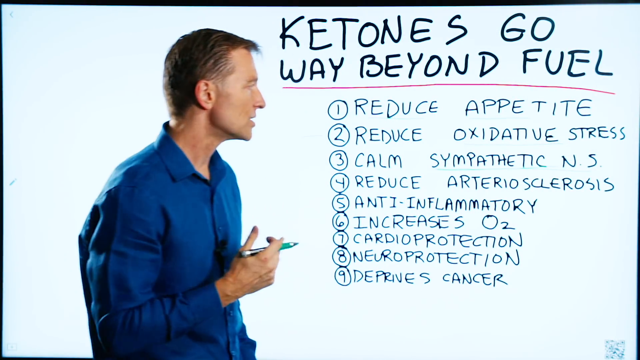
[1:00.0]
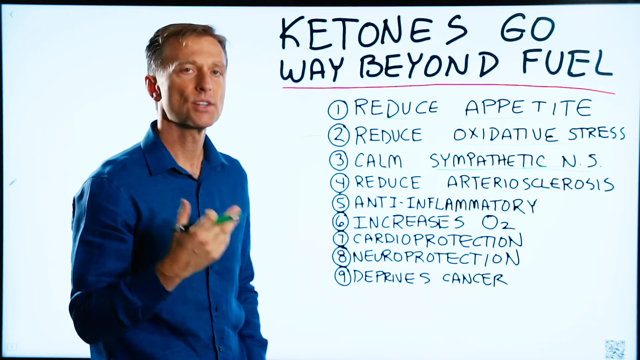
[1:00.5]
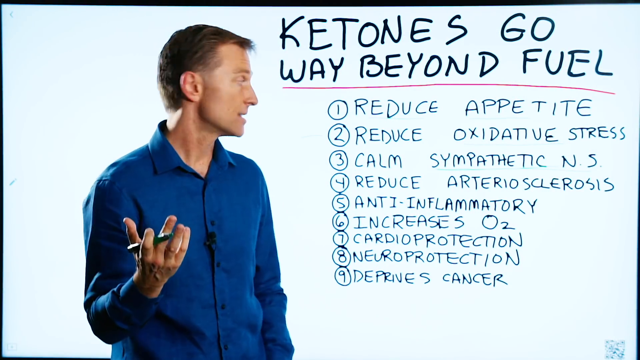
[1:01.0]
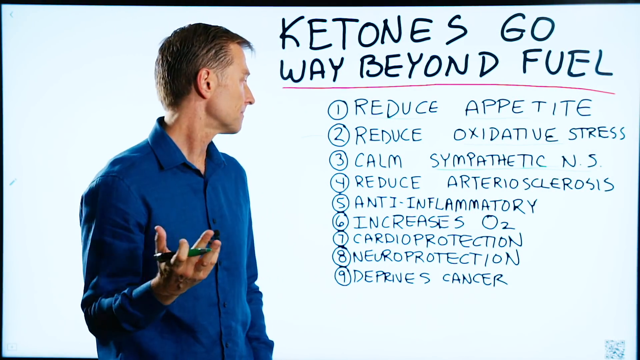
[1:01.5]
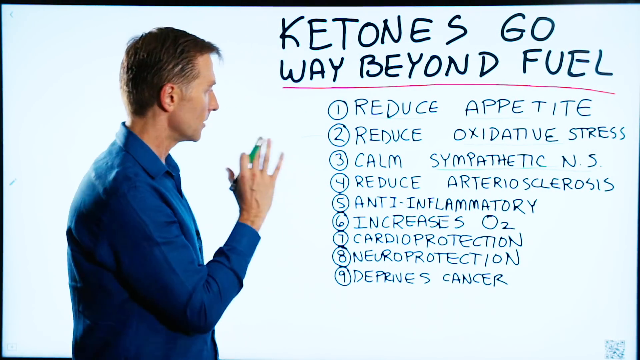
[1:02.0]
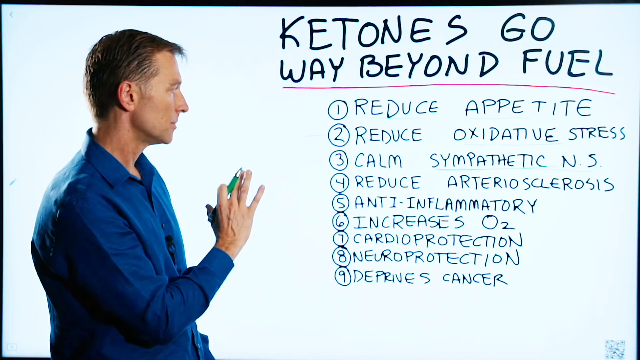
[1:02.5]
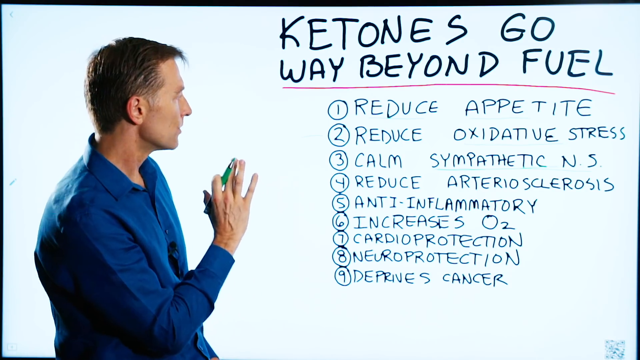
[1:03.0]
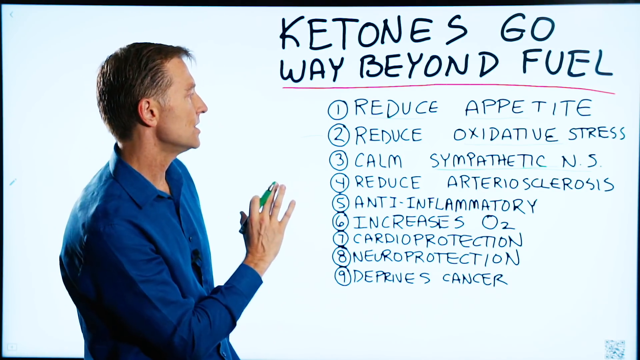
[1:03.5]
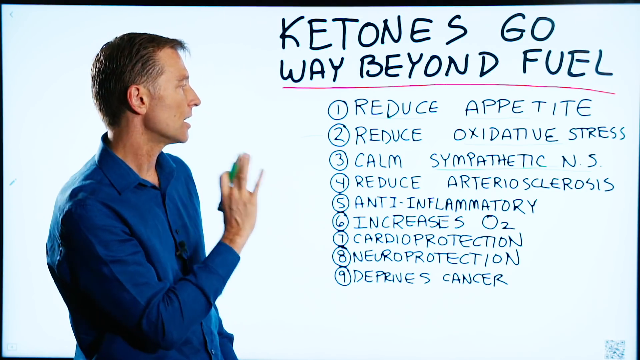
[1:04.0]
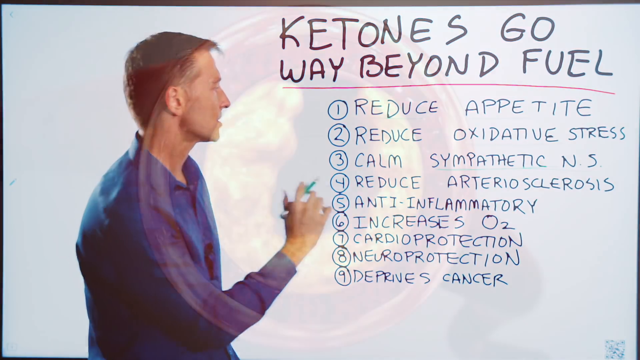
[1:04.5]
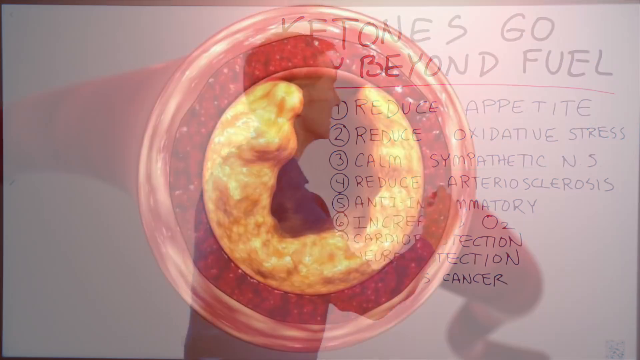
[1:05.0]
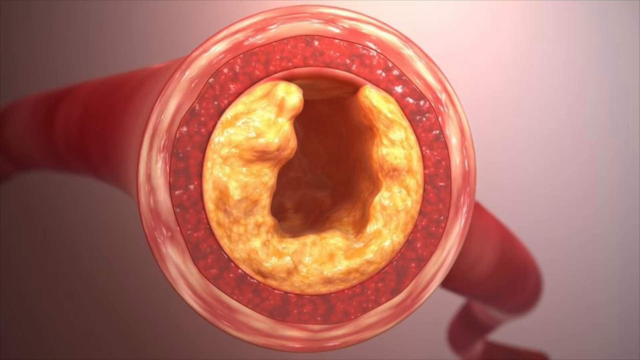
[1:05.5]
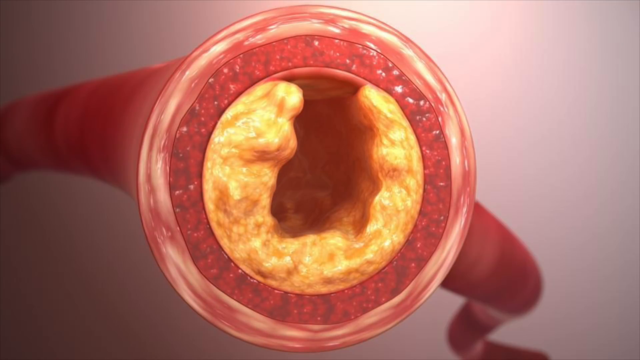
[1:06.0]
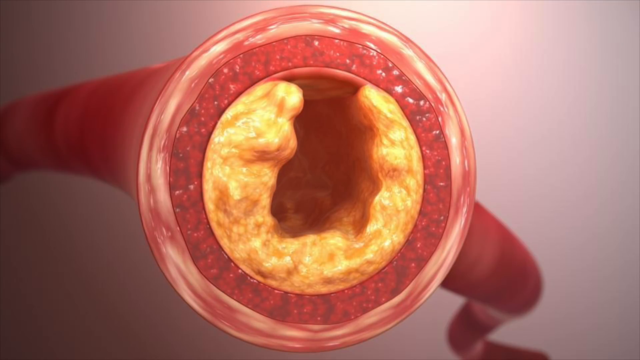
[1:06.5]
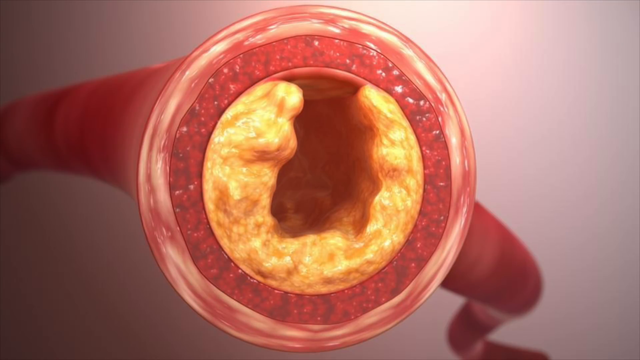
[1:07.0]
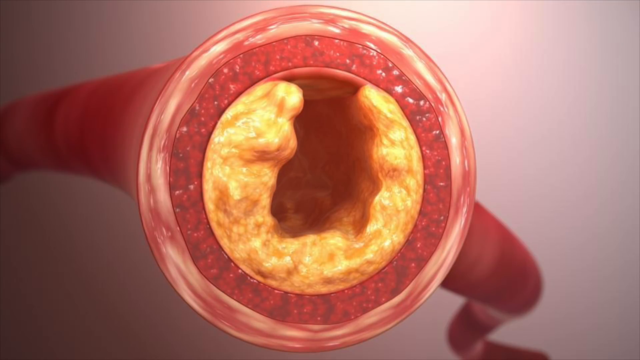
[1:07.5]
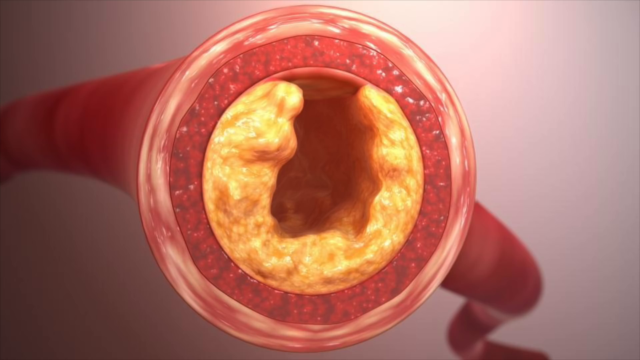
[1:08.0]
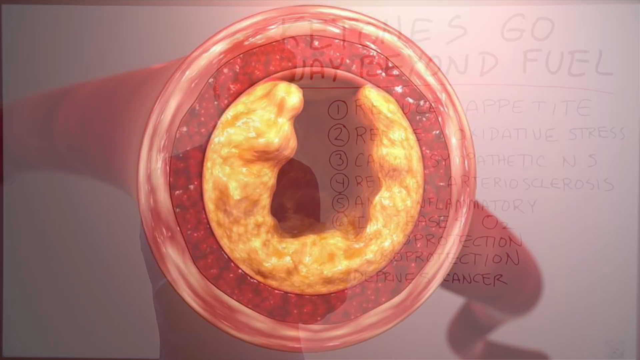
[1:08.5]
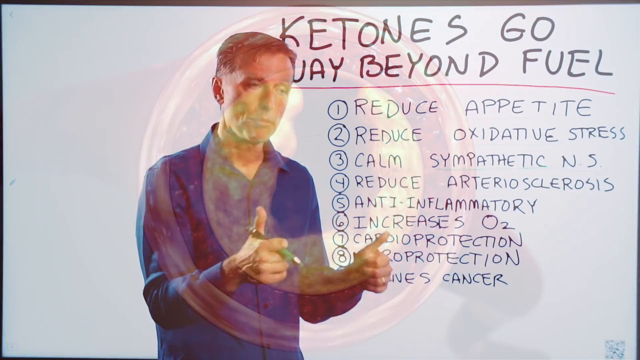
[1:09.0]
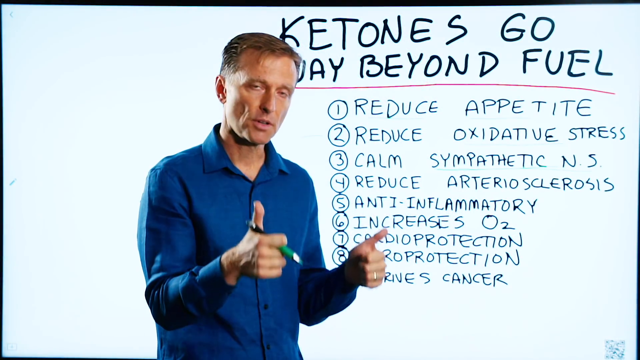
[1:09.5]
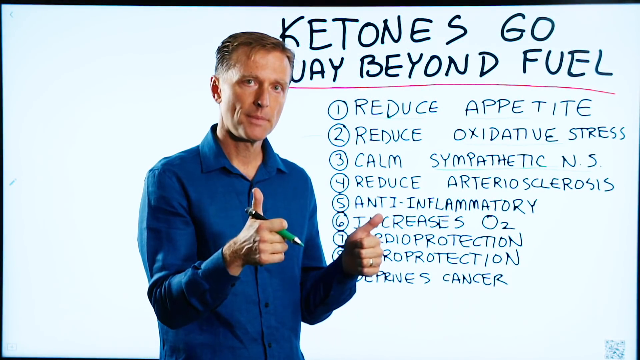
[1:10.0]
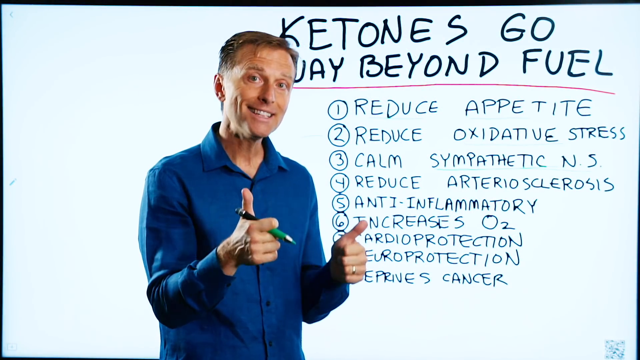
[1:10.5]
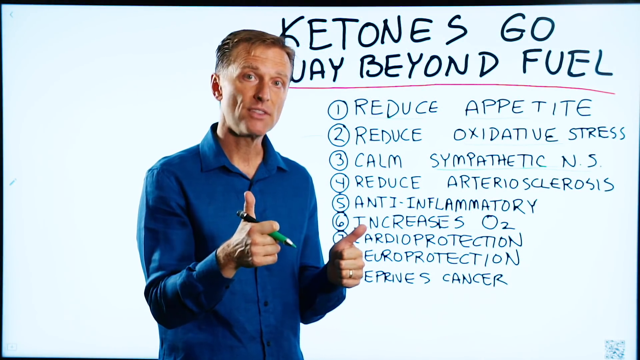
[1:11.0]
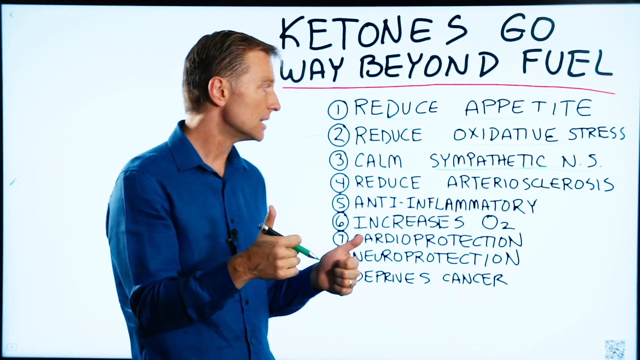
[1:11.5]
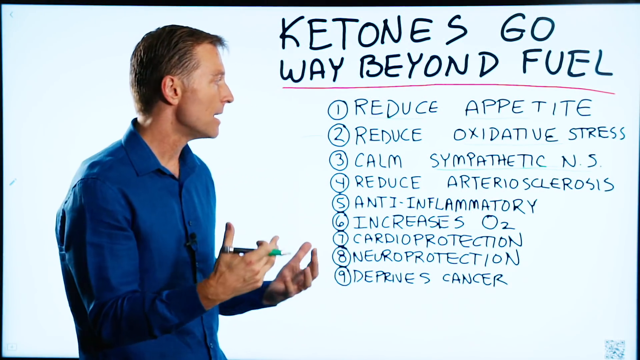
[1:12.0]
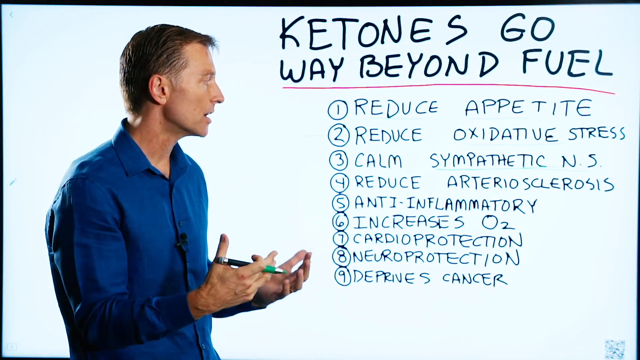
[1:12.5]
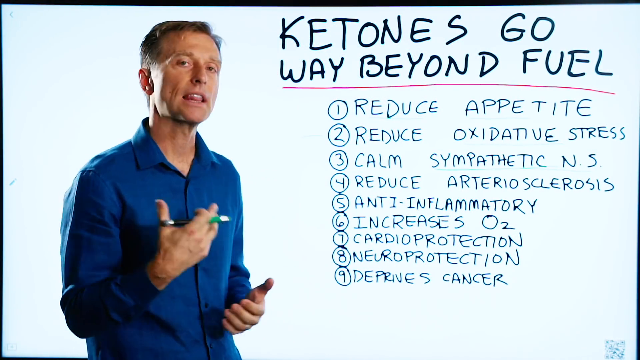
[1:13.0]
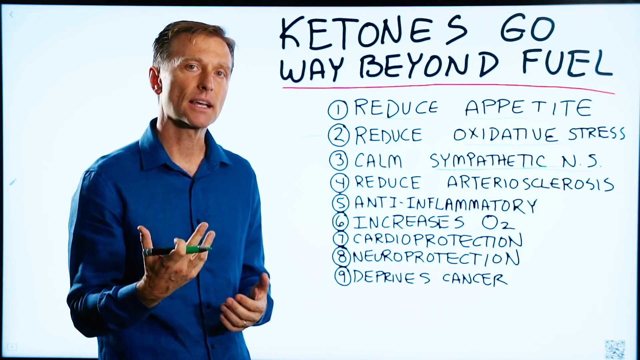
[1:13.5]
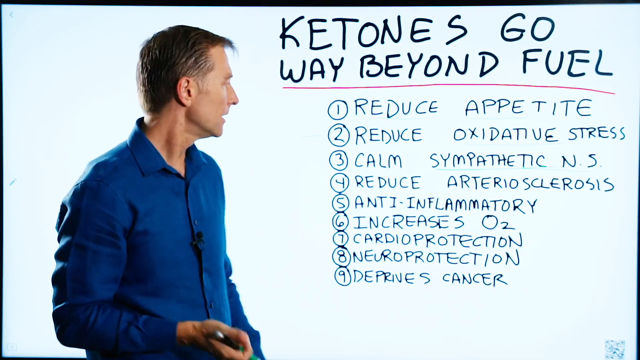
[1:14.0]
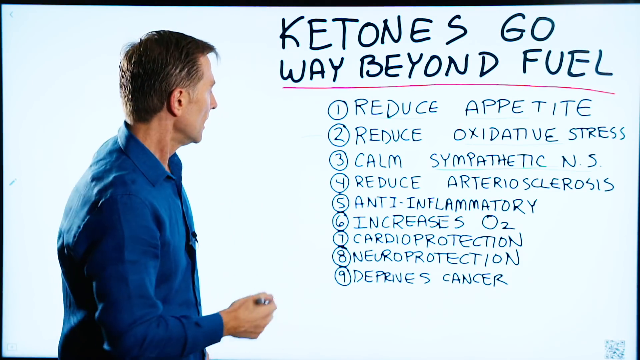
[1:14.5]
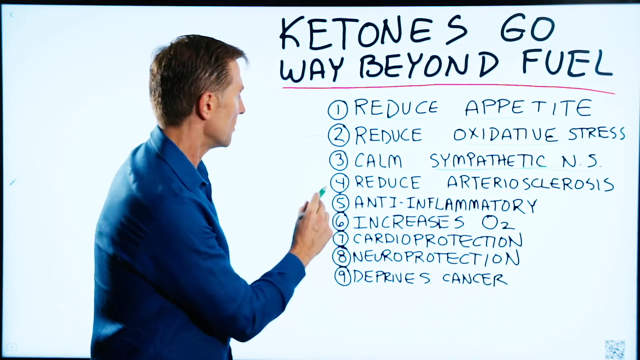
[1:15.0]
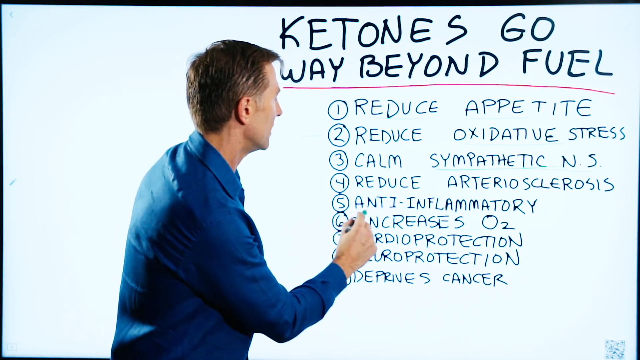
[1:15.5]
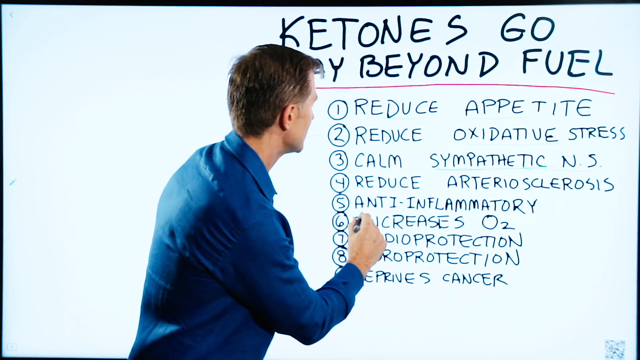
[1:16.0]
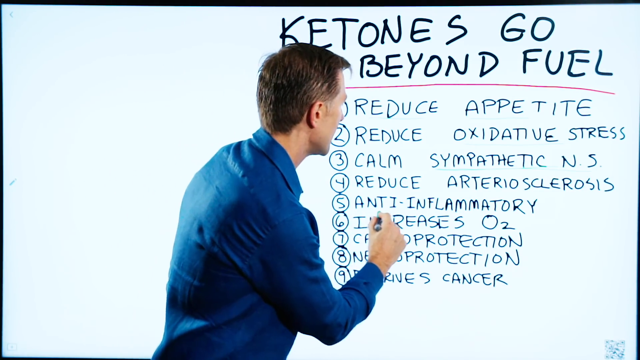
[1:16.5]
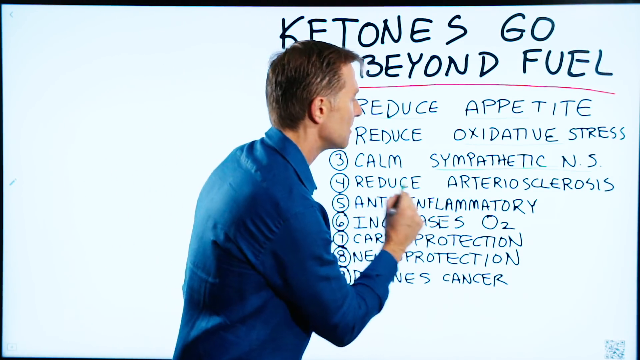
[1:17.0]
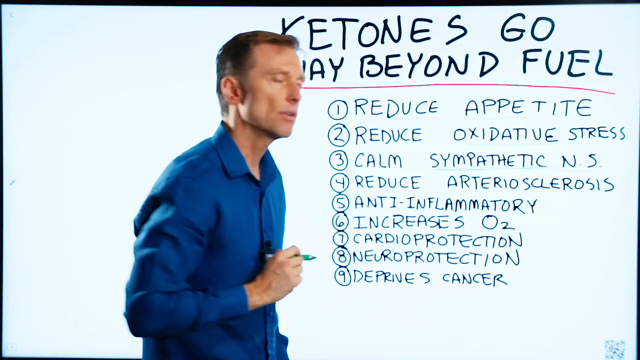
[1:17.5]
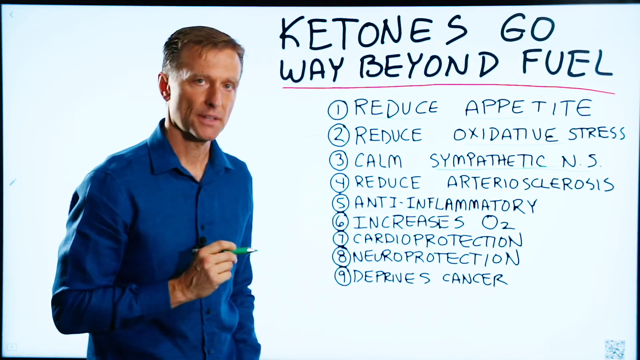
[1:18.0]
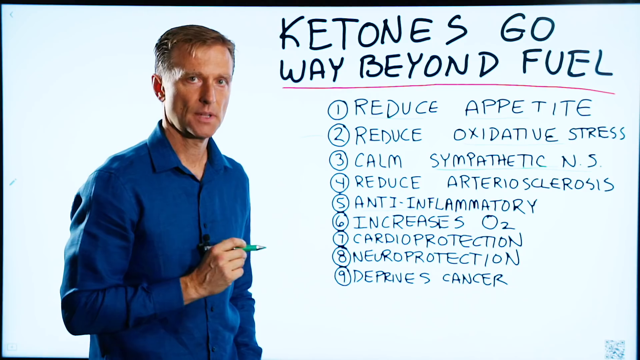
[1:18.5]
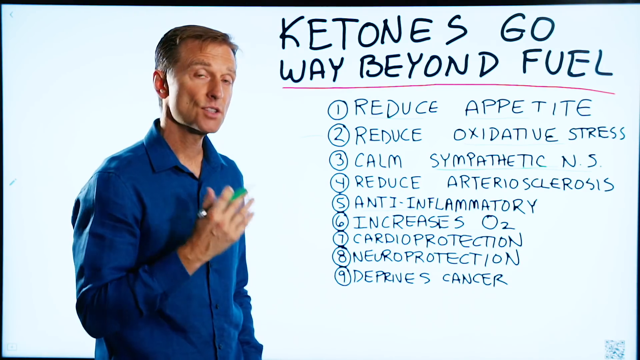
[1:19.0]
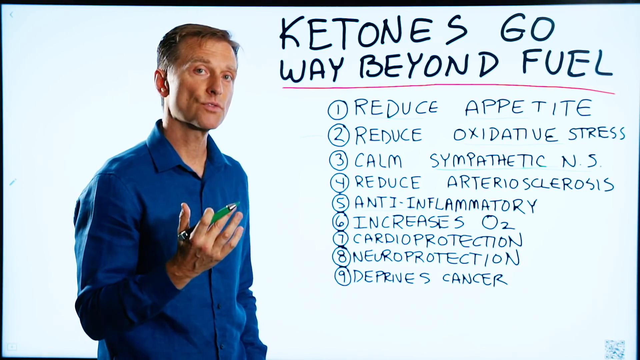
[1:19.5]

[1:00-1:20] The man talks about the principles, appearing to emphasize something. An animated image of something that is clearly part of the body is shown: a red circle with yellow goop. The man seems enthused; he gives a thumbs up on the screen, looks at his list from the beginning, and underlines "anti-inflammatory". There are no words on screen showing what he is saying.